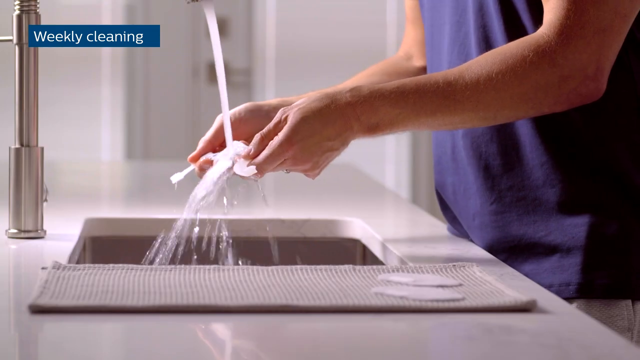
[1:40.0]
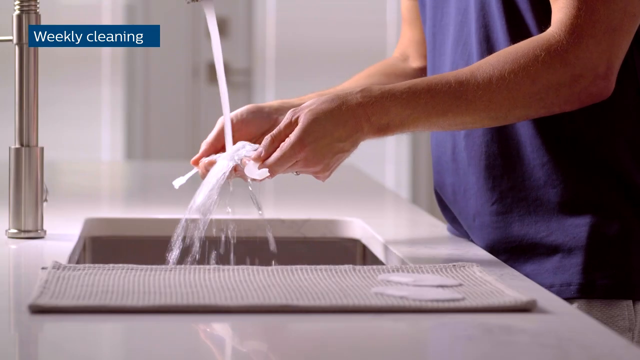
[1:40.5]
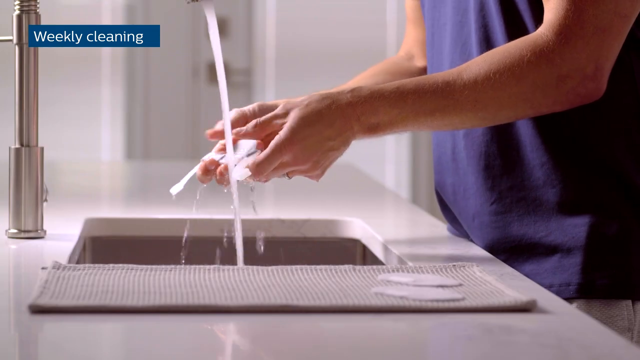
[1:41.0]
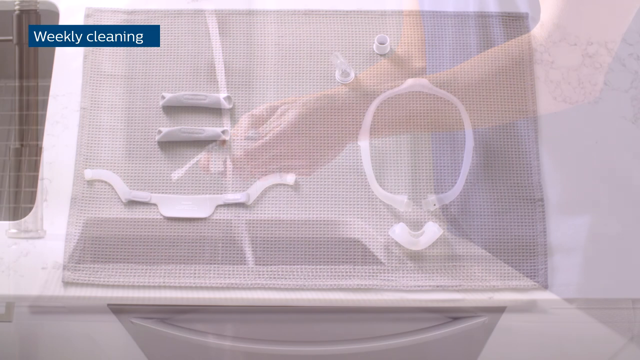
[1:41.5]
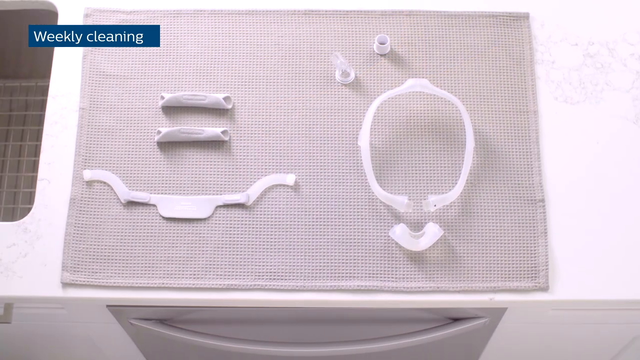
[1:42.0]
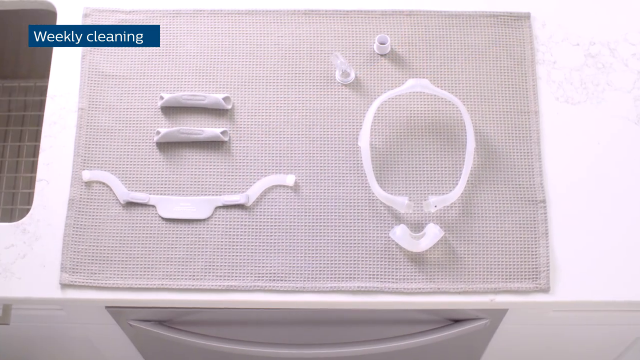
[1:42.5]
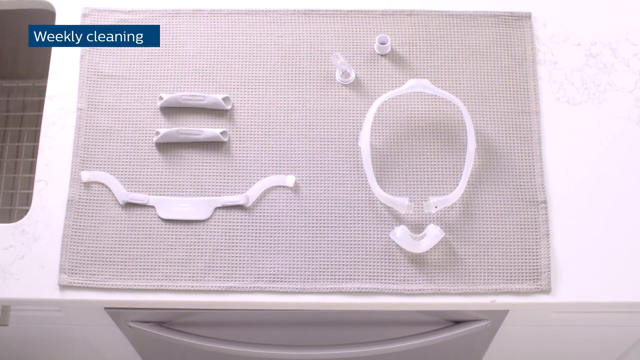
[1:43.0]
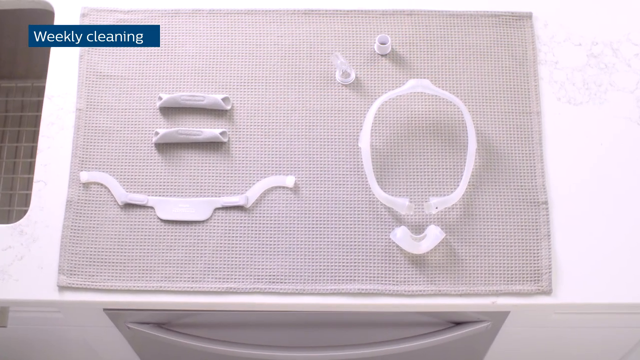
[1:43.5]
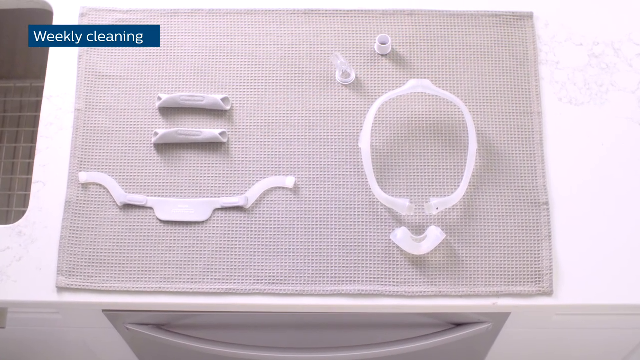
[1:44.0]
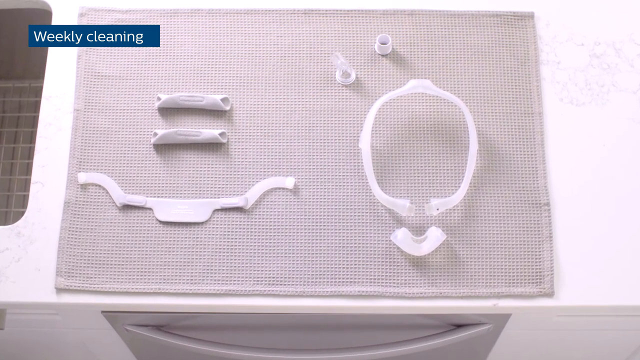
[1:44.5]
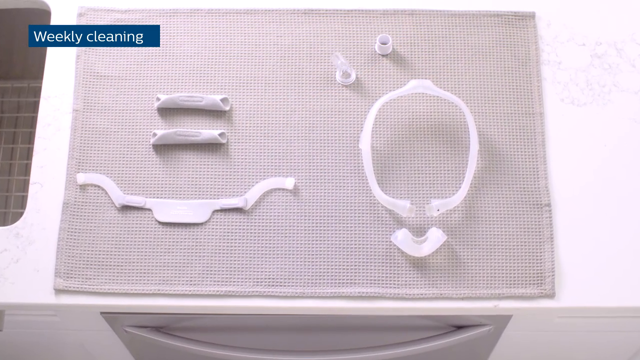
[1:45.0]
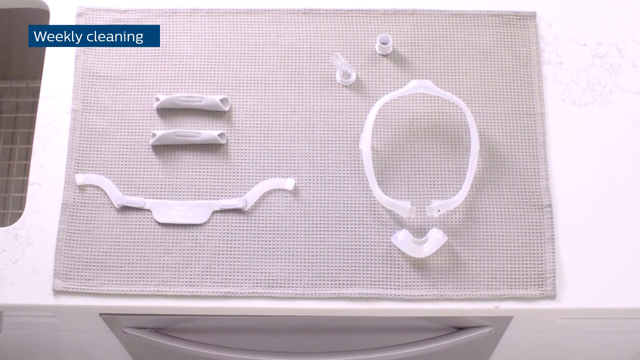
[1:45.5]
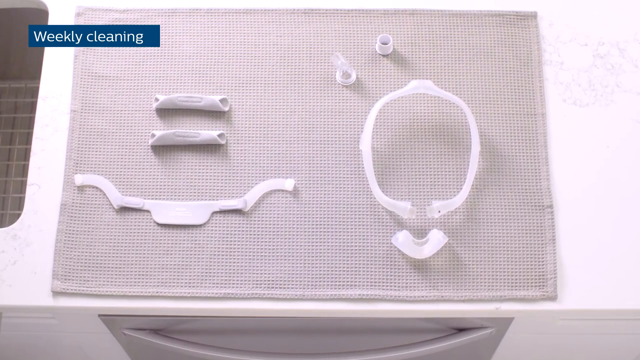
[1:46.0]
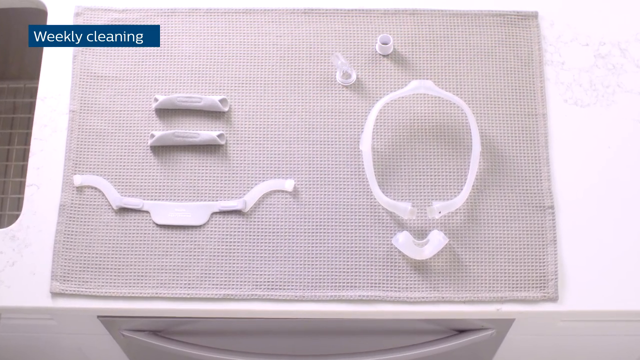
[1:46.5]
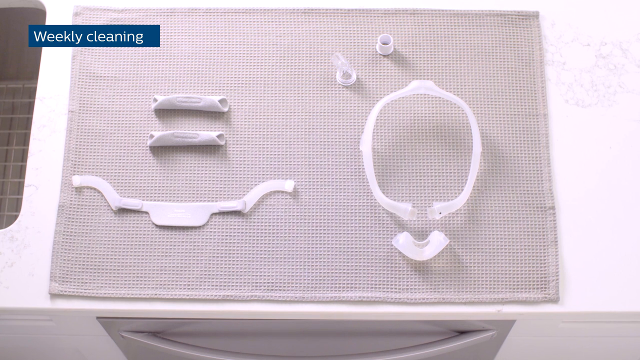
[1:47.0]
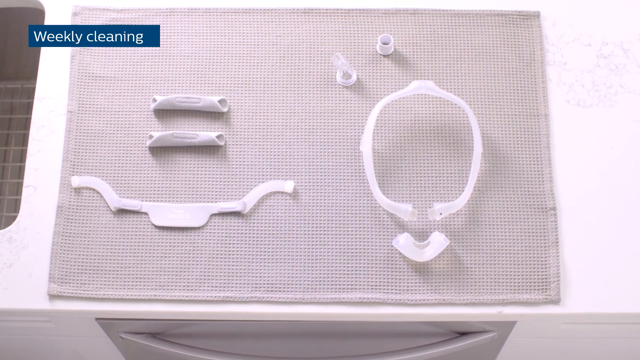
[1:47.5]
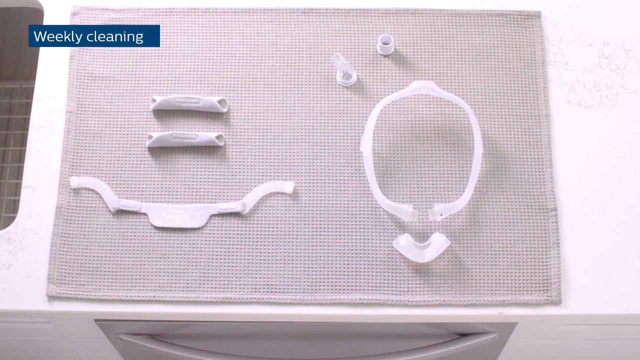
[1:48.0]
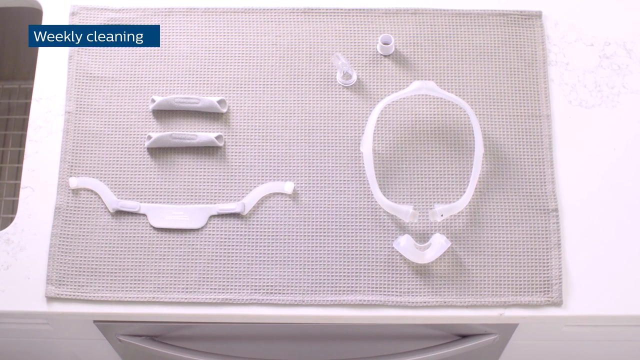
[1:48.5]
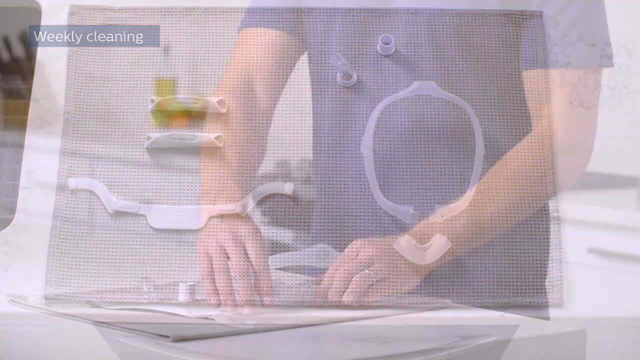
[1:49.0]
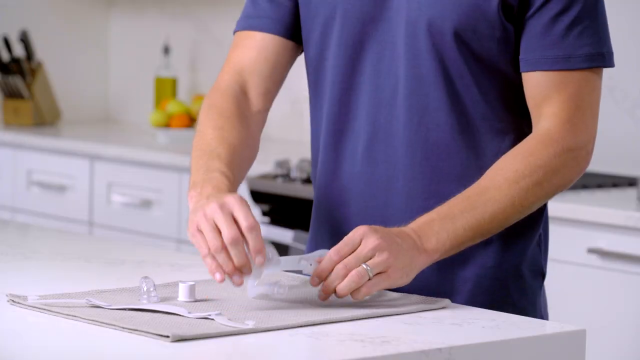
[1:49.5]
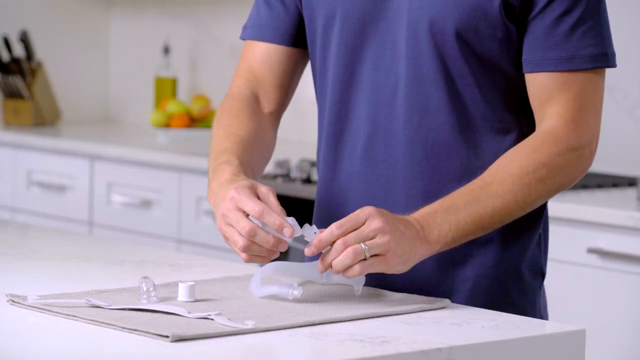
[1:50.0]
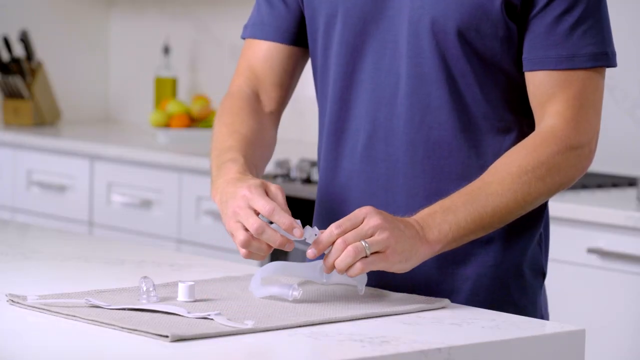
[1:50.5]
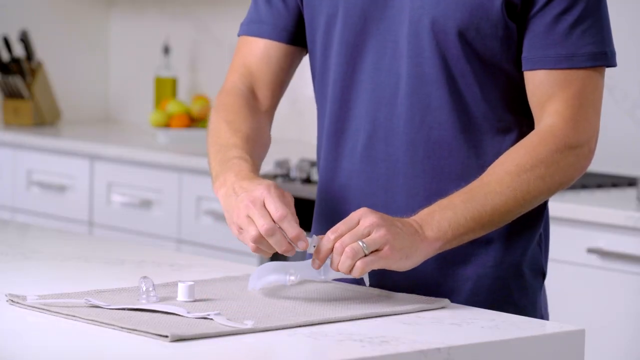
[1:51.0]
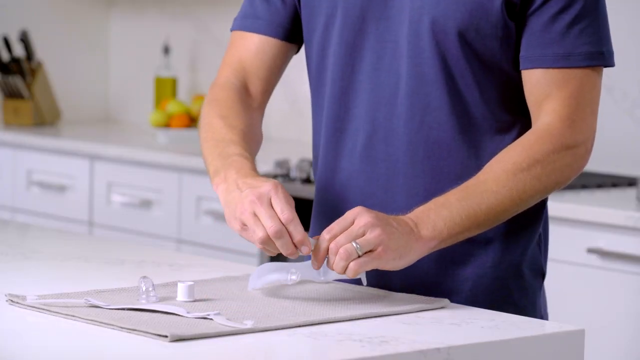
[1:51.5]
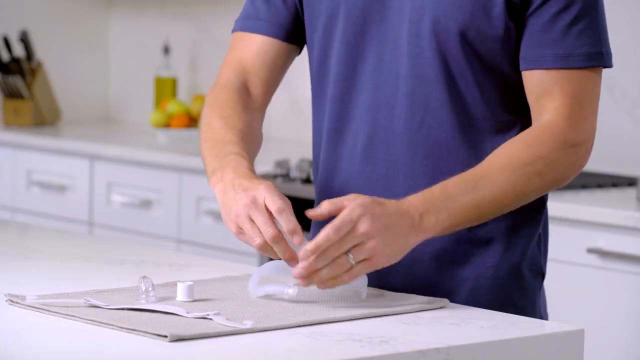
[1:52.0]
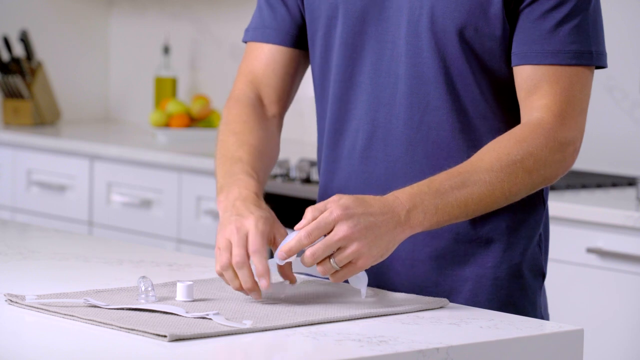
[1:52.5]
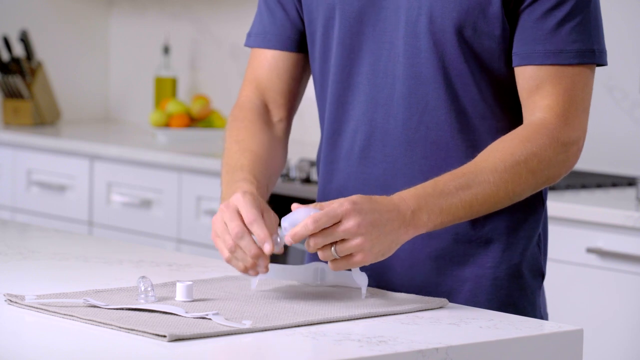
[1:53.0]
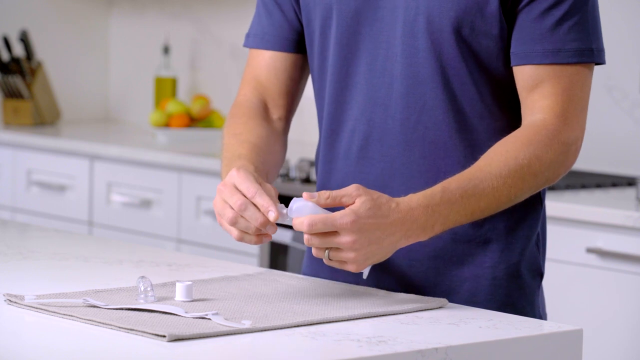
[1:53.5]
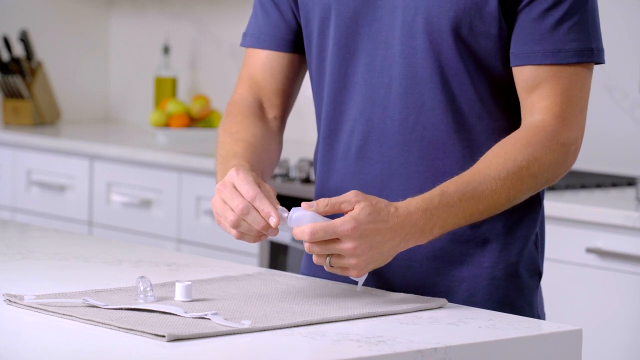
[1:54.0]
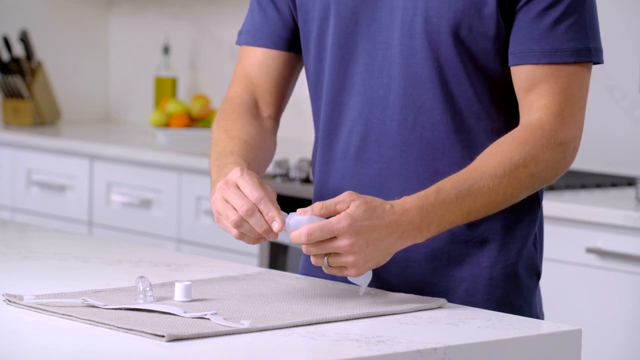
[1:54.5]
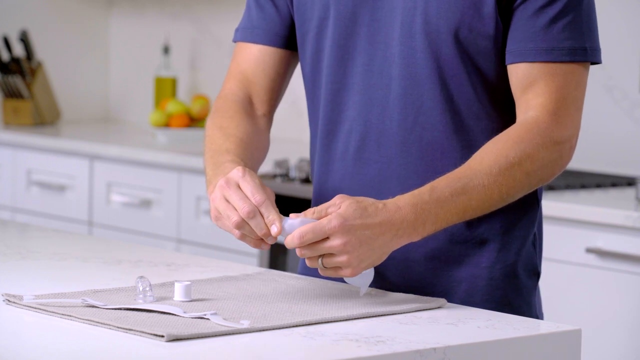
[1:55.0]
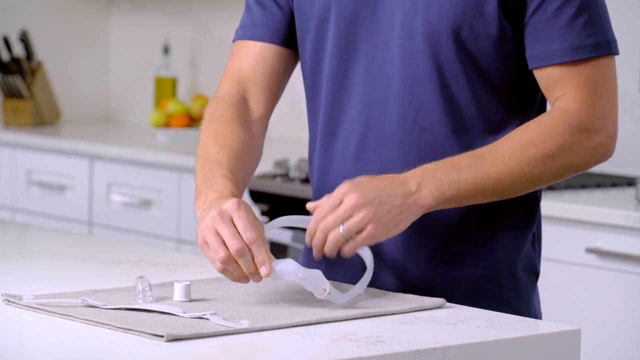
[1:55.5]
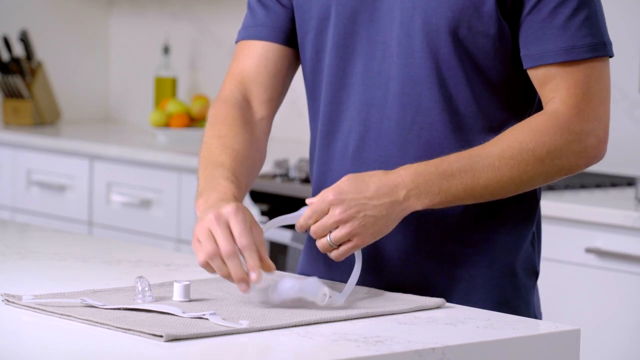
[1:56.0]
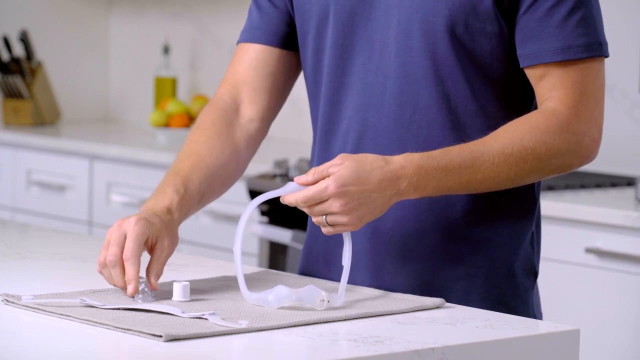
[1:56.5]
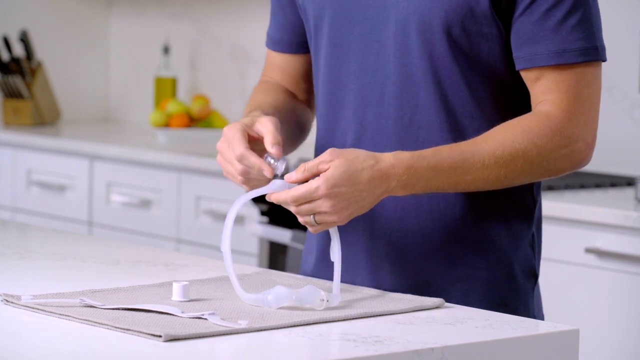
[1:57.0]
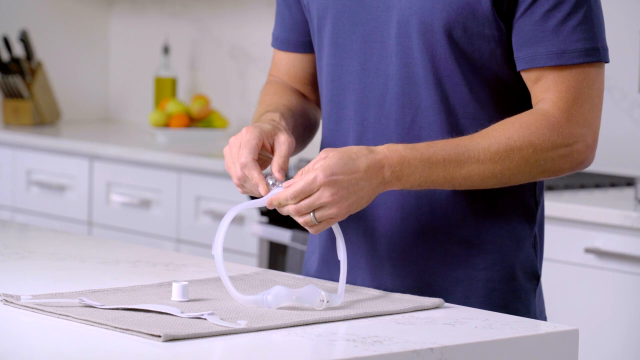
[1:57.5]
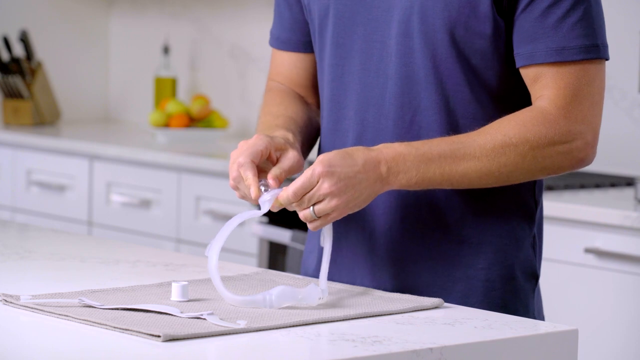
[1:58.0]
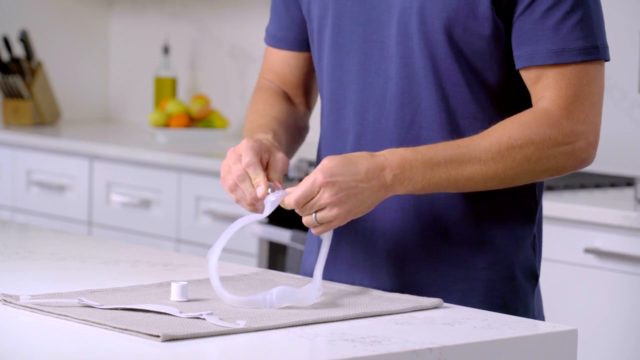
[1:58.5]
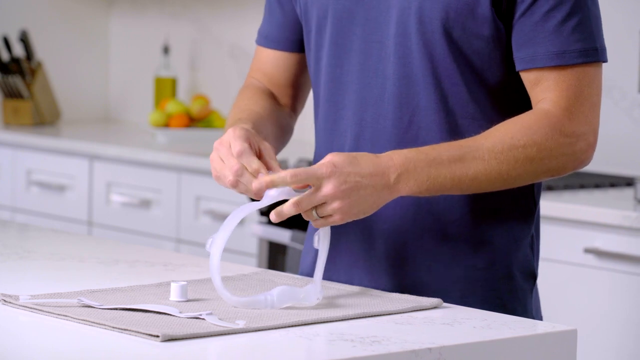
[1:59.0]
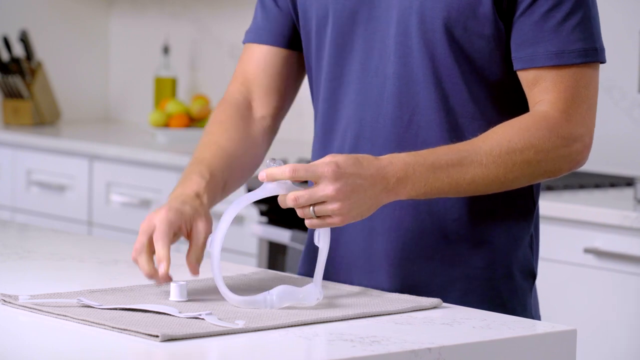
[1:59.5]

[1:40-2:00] The man continues washing the part he put in the bowl. The same parts are then shown laid out on the mat, this time with no indication of which parts are to be cleaned. He appears to start putting the mask back together, connecting some sort of ring part and installing some sort of knob at the back of the mask to connect two pieces. Afterwards he is still kind of holding the loop part of the mask together. The sink is a regular silver sink, and the water looks to be flowing strongly; there does not appear to be a filter. The kitchen cabinet has sort of a white marble look.